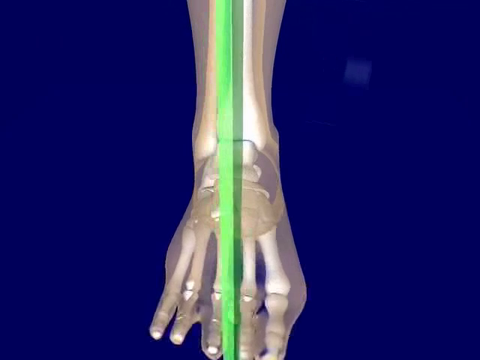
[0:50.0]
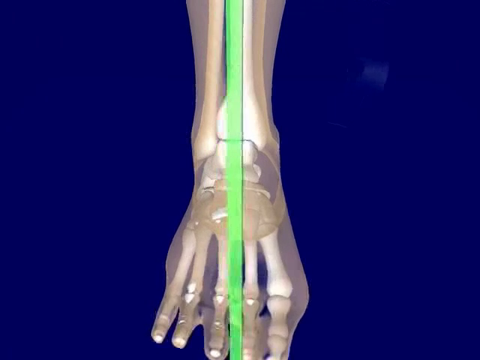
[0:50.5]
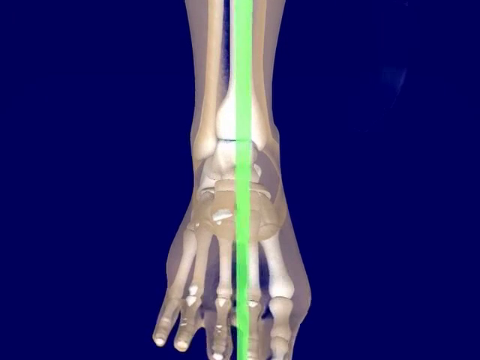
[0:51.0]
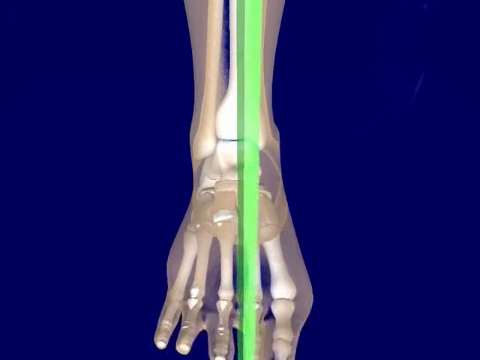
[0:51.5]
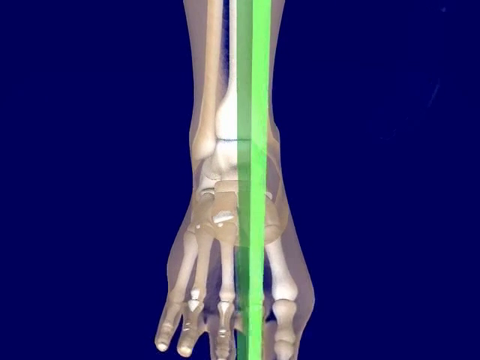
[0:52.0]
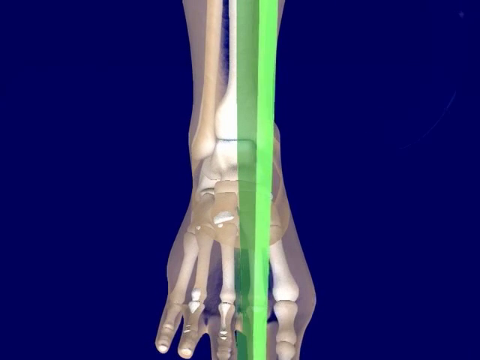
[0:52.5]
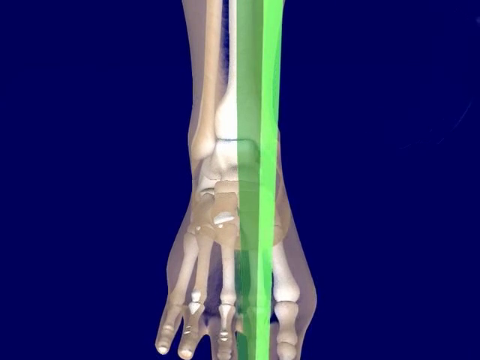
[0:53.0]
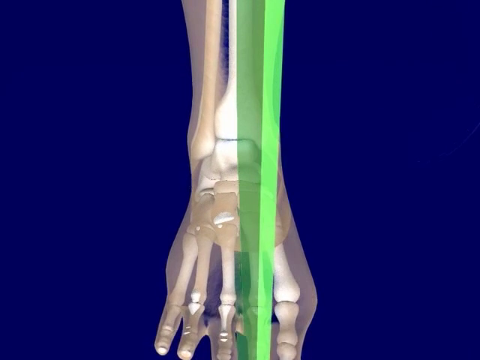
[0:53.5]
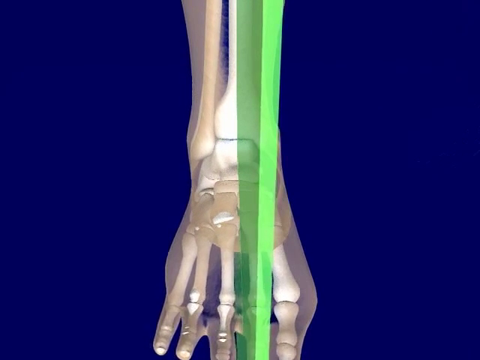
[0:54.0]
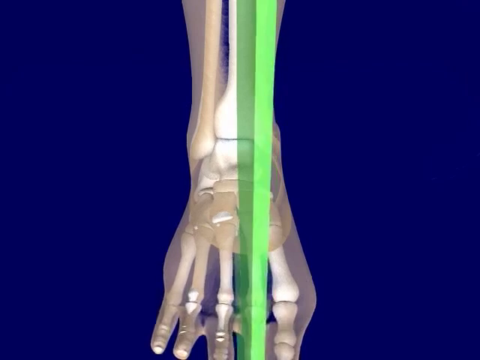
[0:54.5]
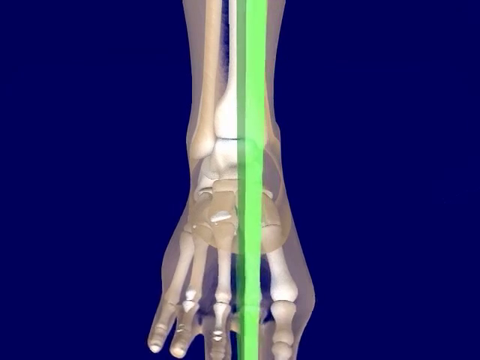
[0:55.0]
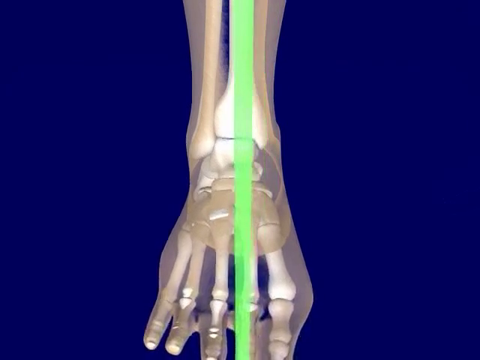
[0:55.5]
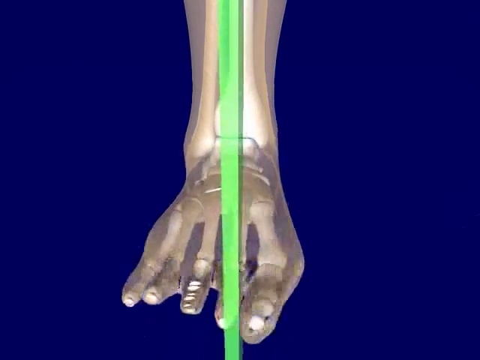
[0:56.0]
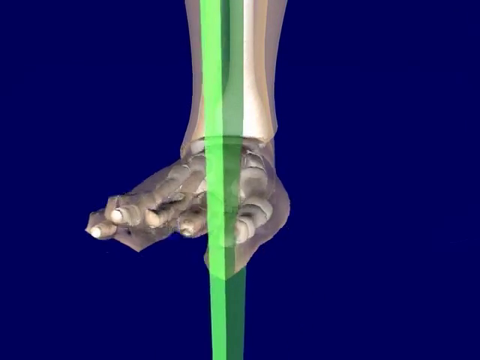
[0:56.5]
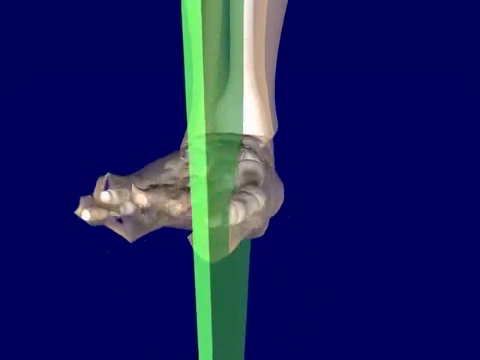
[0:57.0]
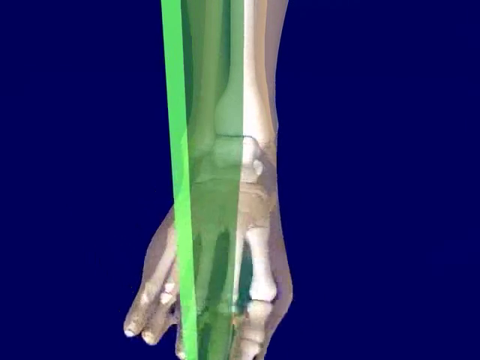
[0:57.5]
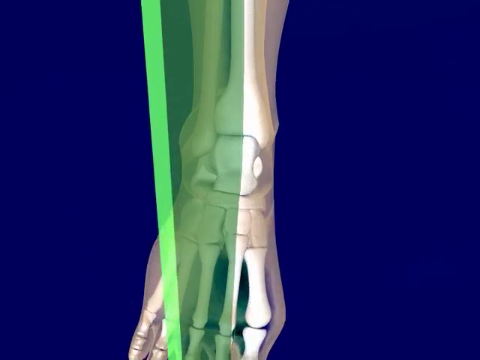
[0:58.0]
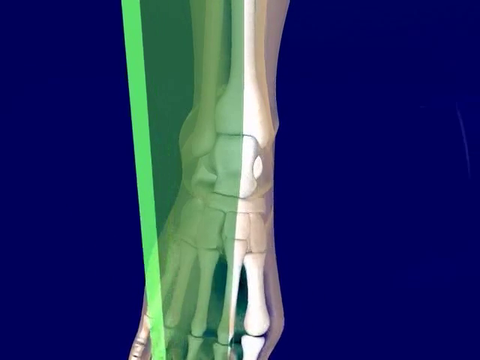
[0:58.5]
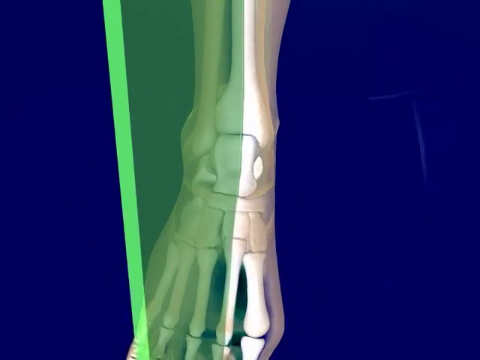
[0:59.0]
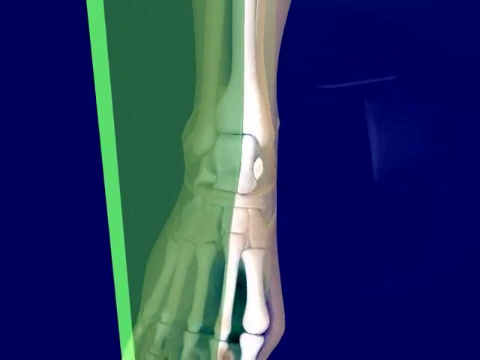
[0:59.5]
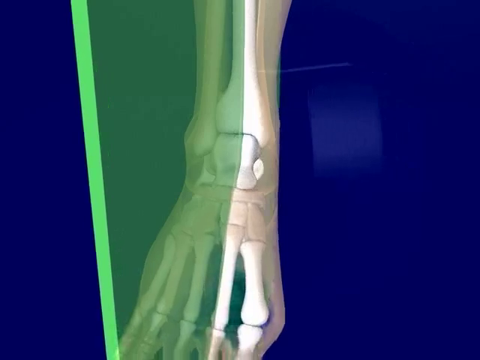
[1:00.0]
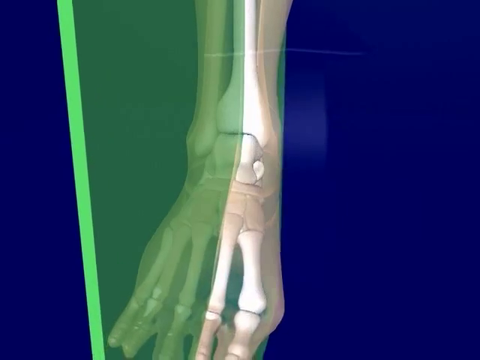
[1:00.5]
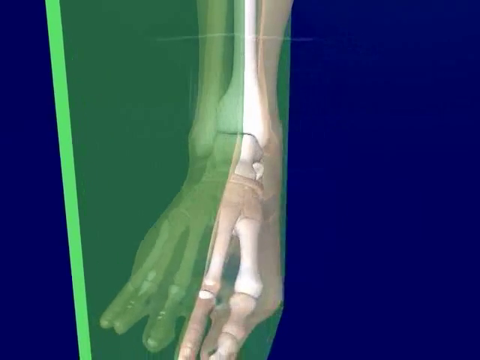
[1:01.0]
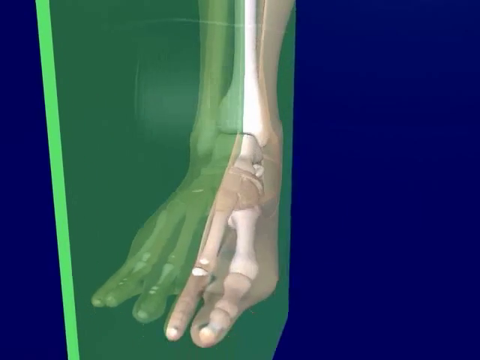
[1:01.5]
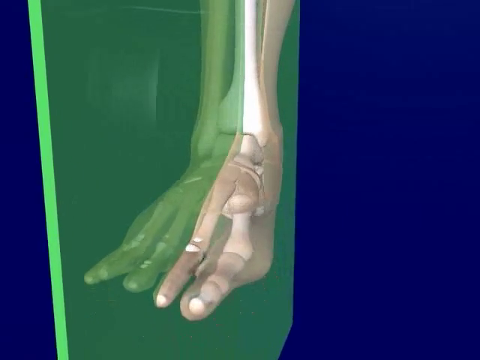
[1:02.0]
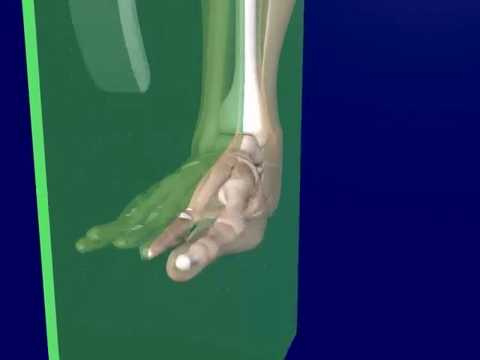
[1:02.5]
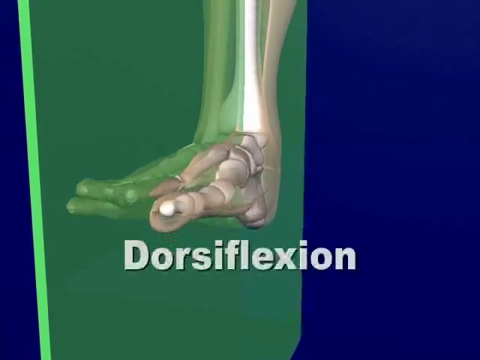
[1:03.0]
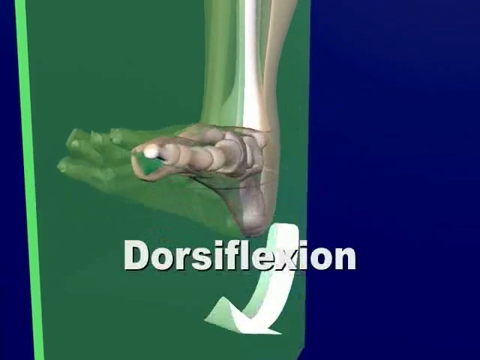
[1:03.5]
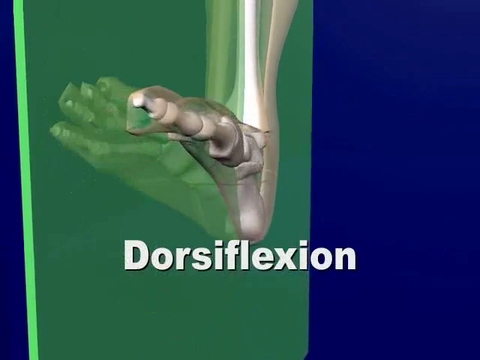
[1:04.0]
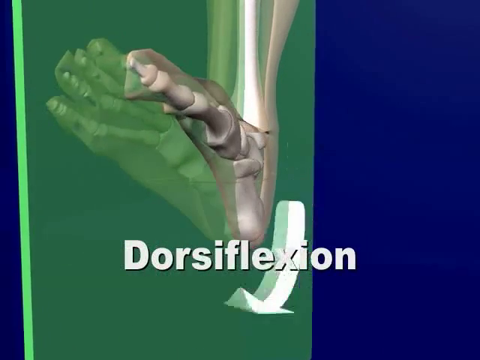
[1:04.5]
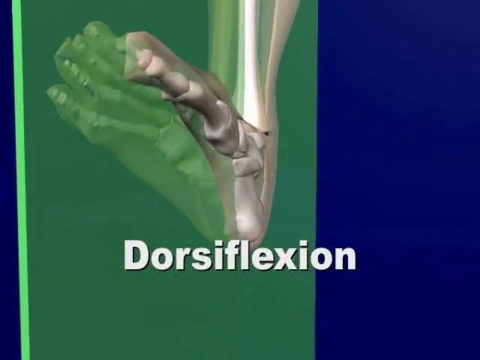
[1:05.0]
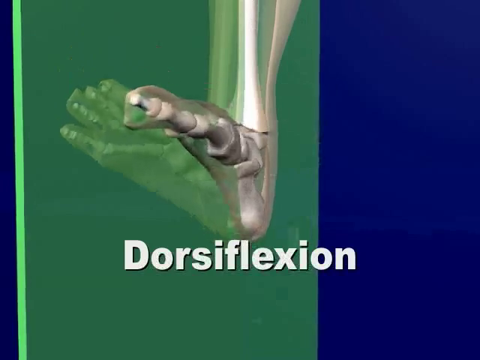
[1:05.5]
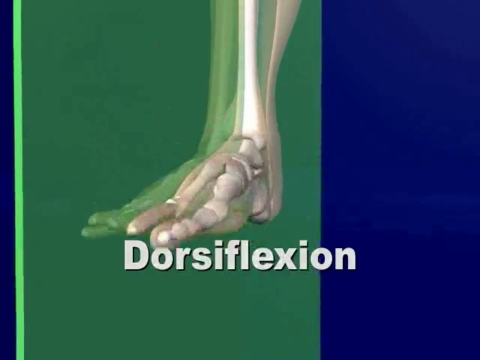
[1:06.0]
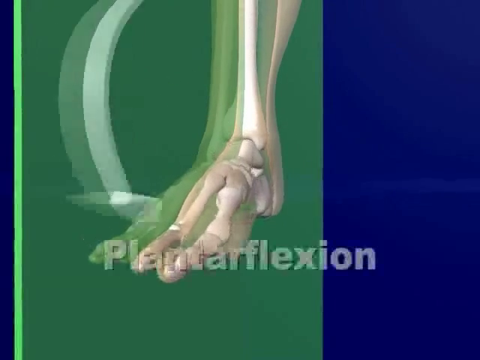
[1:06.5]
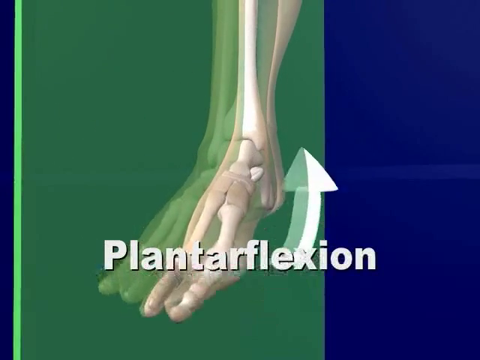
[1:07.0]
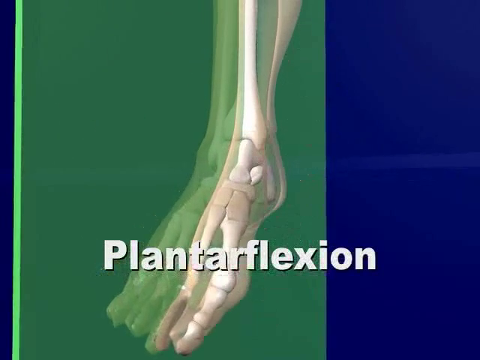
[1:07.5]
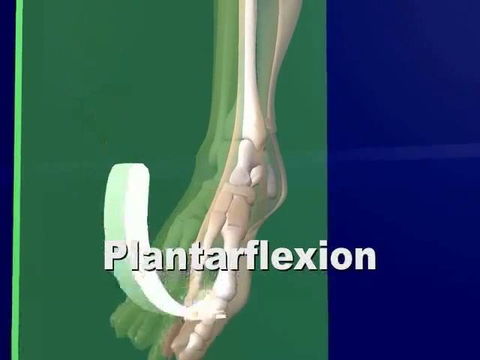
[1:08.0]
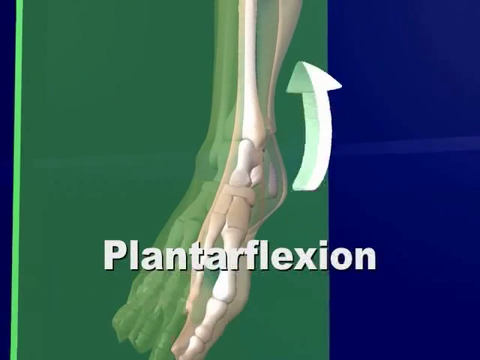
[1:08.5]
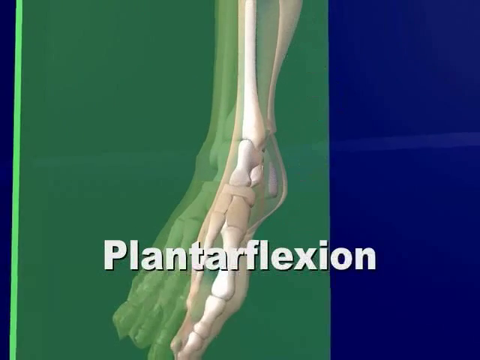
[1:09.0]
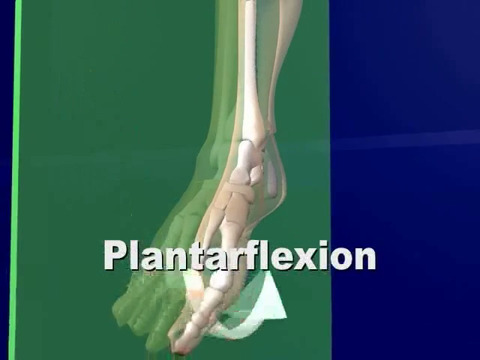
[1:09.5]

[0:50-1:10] An x-ray version of a foot and ankle is shown. A green divider sits between the big toe and another toe. The foot turns from left to right, giving a view of its side. The word "dorsiflexion" appears with an arrow going up and around clockwise, and then "plantar flexion" appears with the arrow going up and around, more clockwise. The ankle and foot are presented against a dark screen. The lime divider is between the first two toes and the last three toes. The foot is raised, brought up closer to the ankle, and the point where the foot connects to the ankle is visible. The leg is see-through, and the diagram moves ever so slightly.